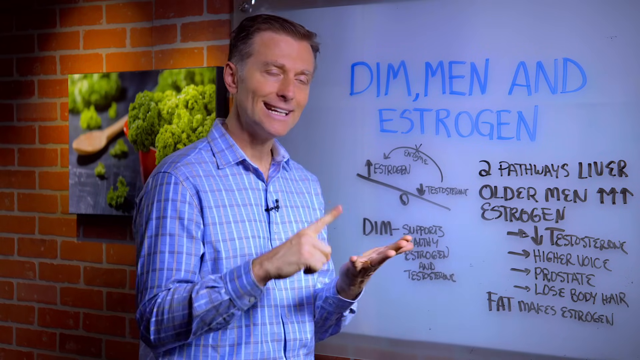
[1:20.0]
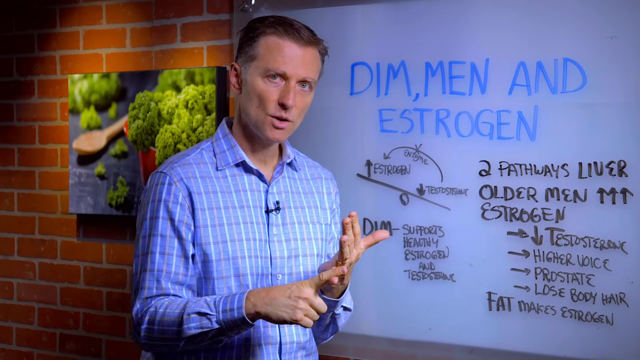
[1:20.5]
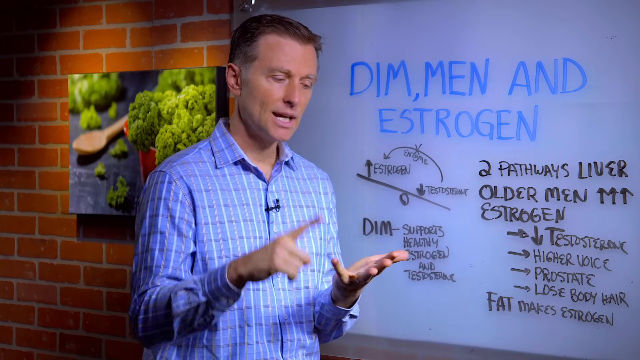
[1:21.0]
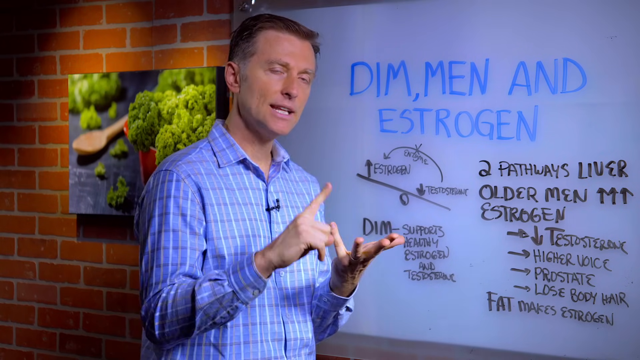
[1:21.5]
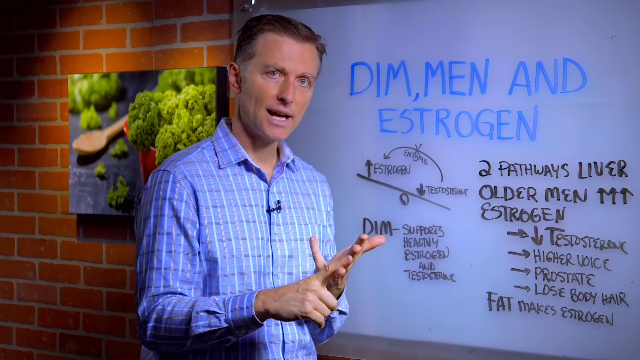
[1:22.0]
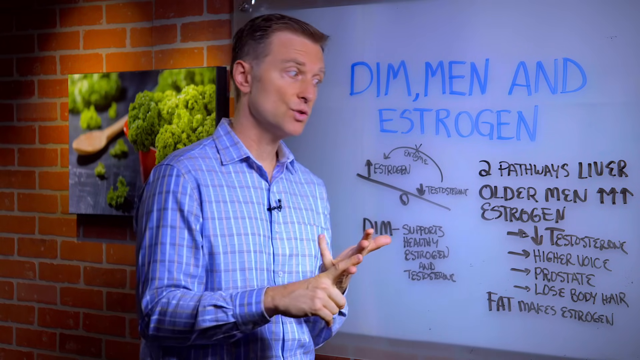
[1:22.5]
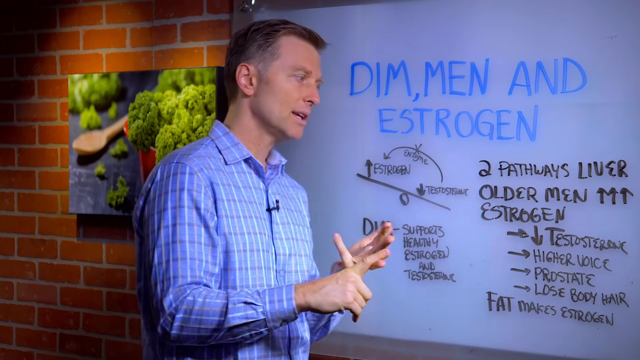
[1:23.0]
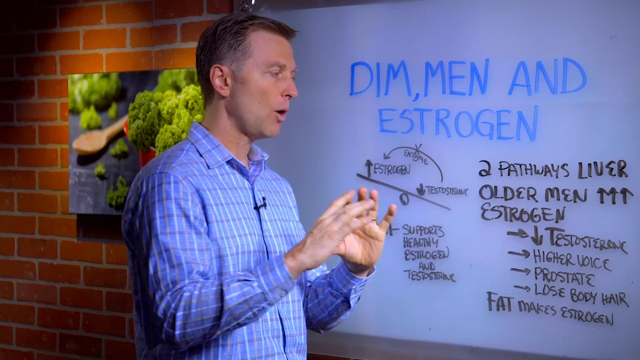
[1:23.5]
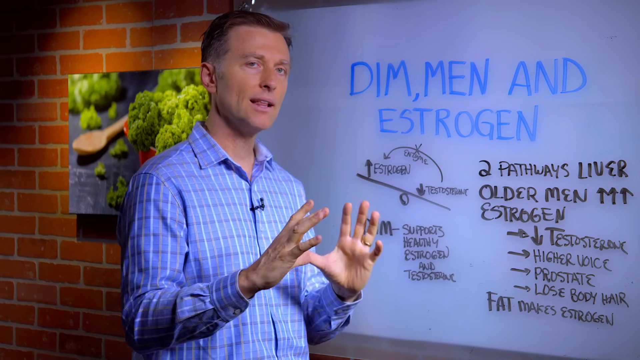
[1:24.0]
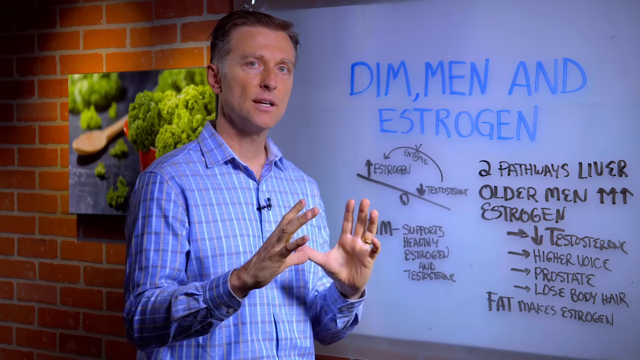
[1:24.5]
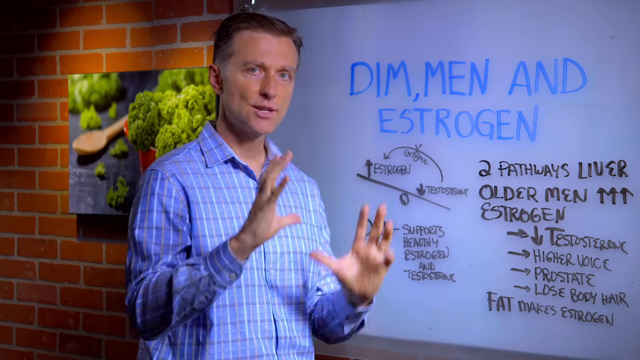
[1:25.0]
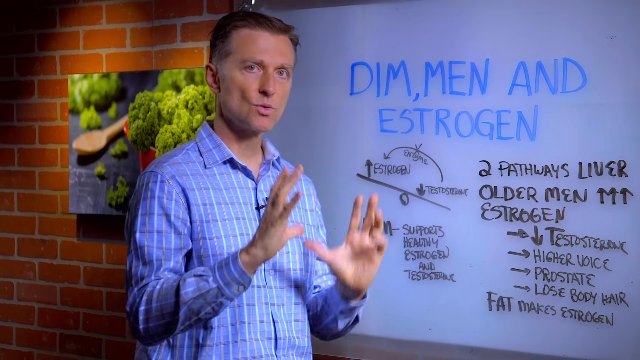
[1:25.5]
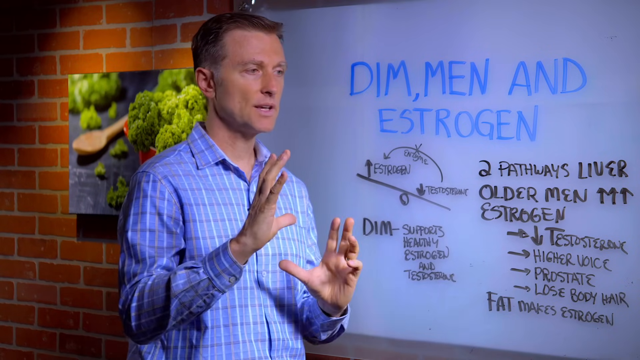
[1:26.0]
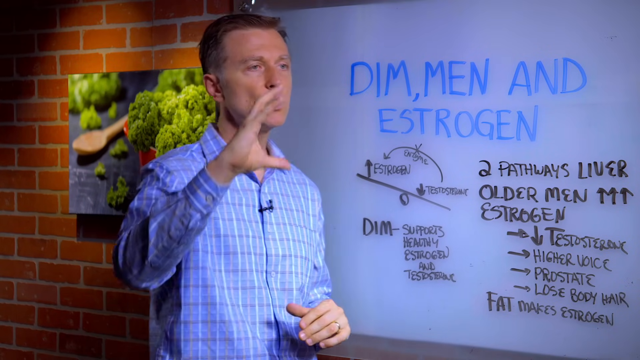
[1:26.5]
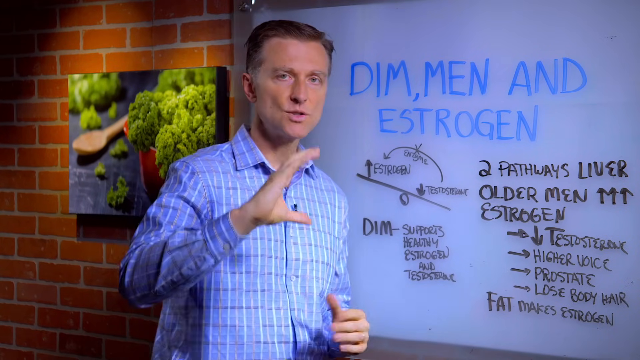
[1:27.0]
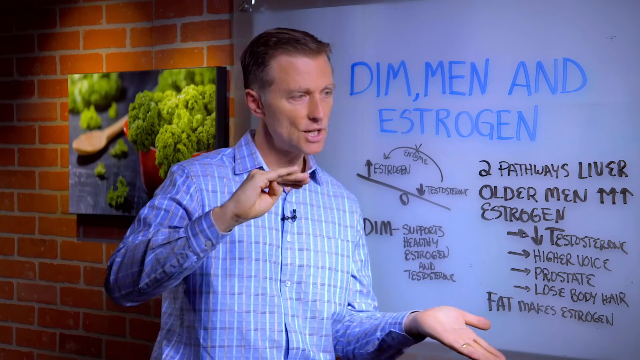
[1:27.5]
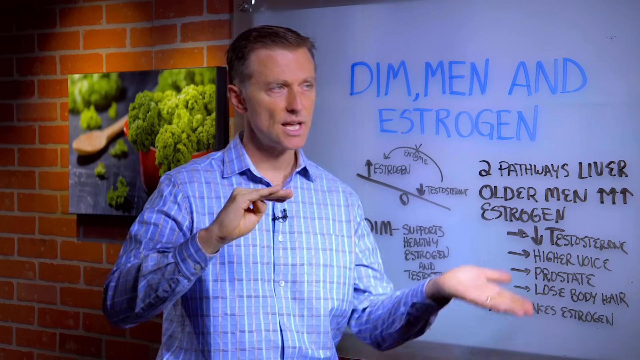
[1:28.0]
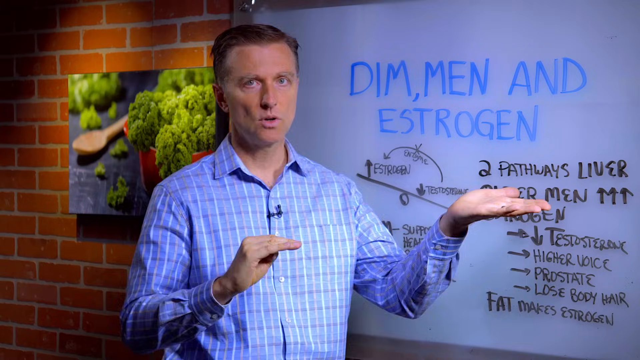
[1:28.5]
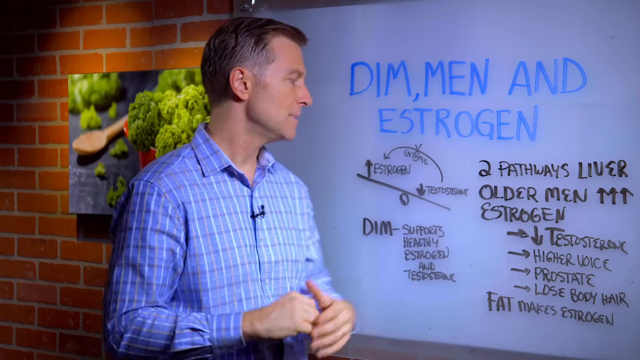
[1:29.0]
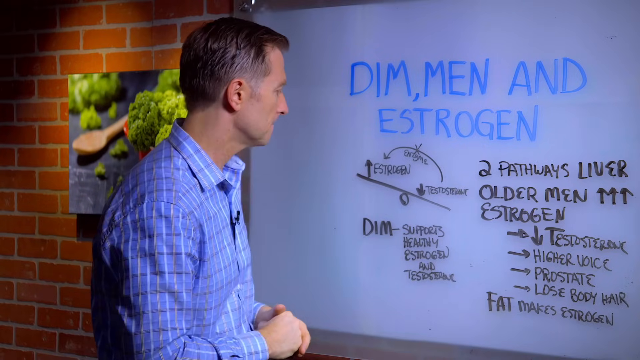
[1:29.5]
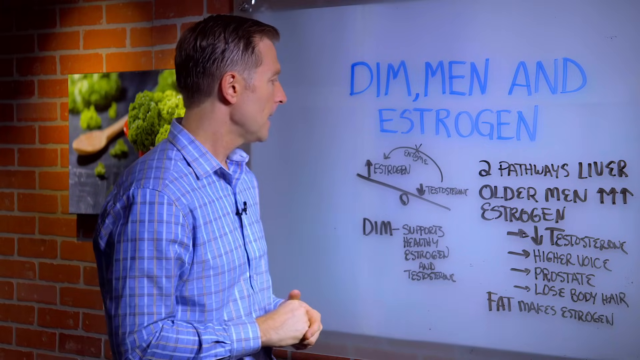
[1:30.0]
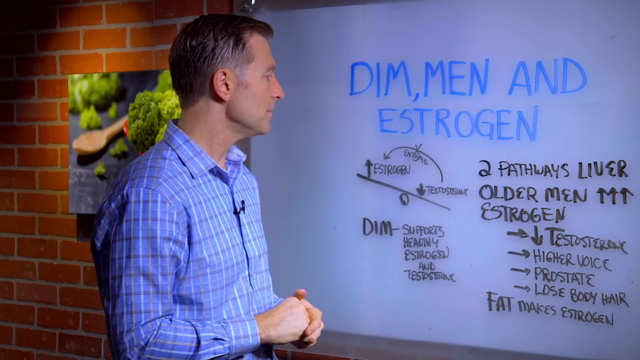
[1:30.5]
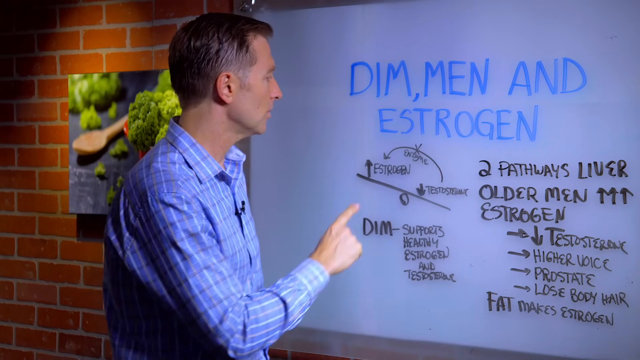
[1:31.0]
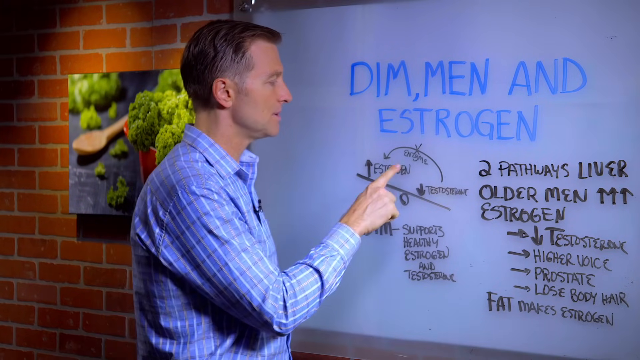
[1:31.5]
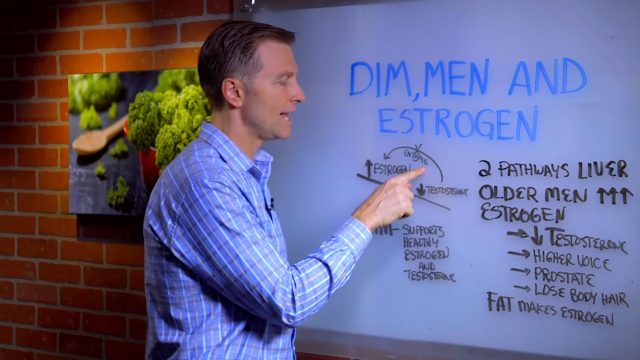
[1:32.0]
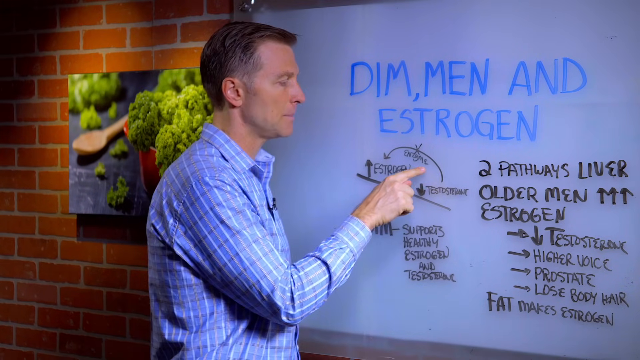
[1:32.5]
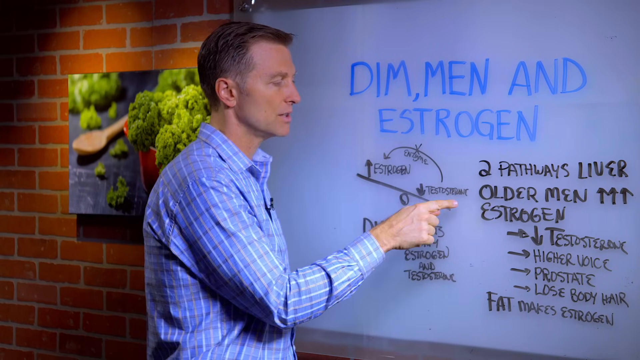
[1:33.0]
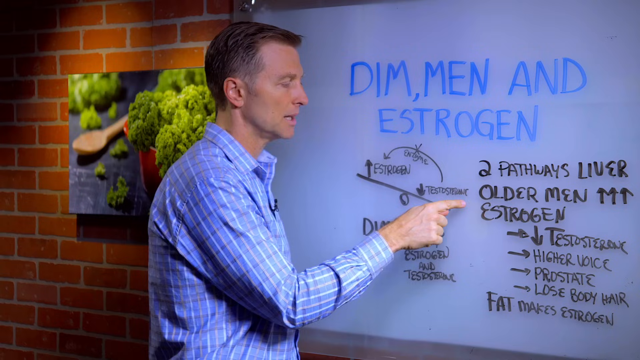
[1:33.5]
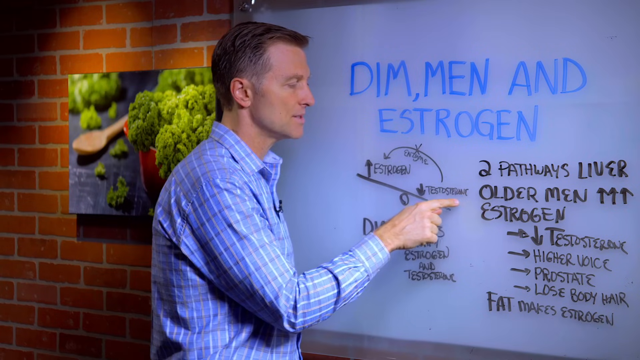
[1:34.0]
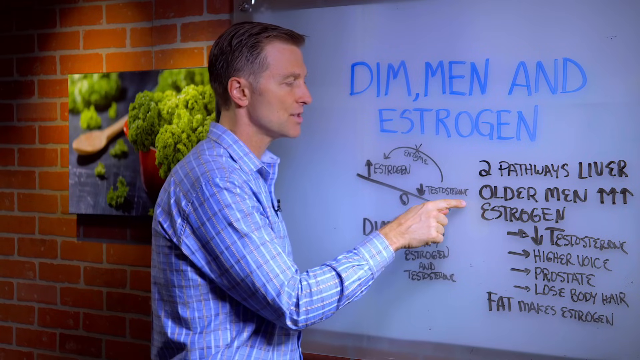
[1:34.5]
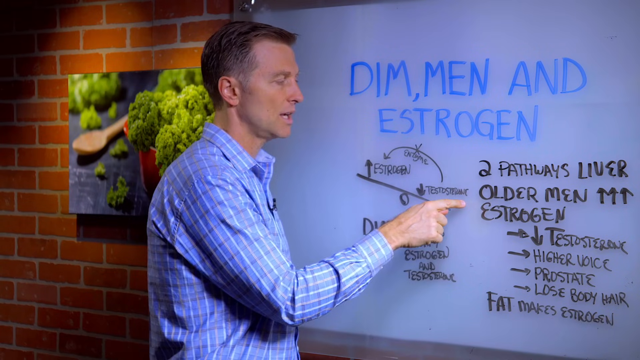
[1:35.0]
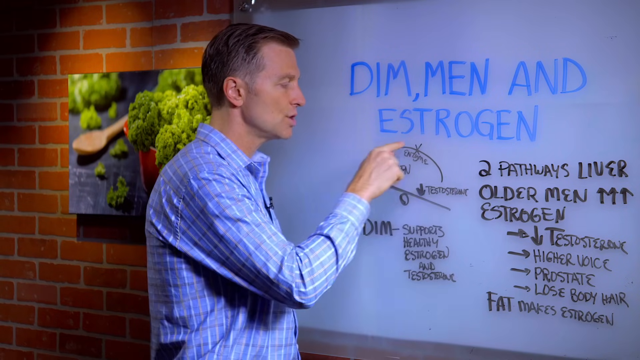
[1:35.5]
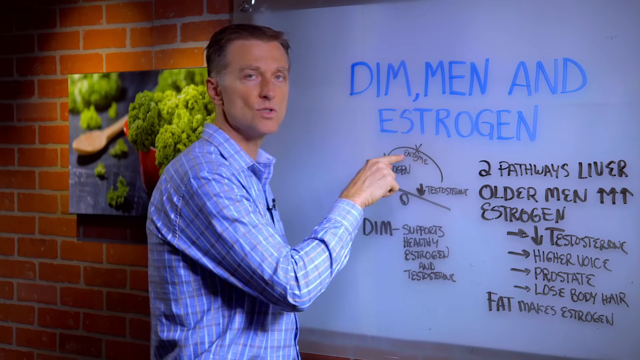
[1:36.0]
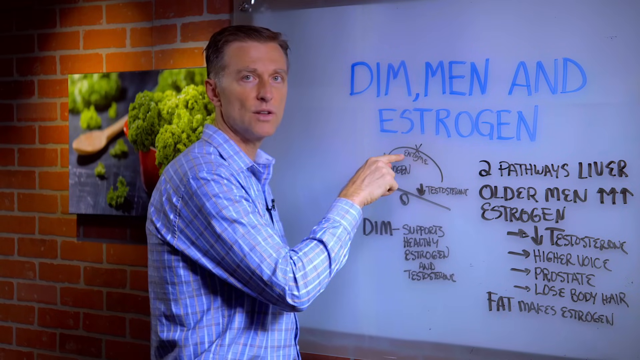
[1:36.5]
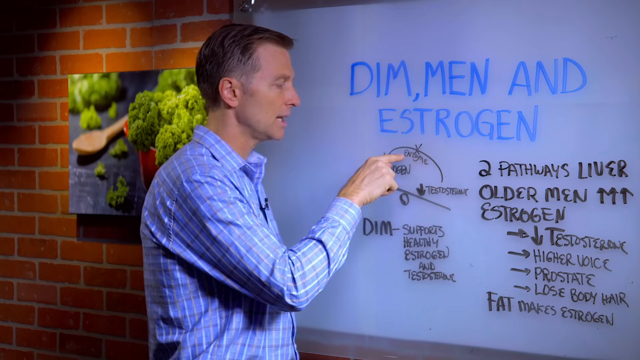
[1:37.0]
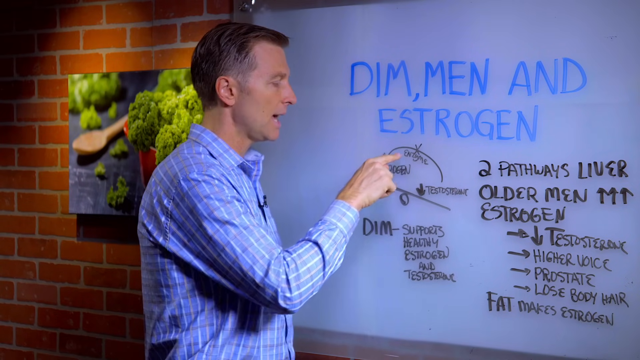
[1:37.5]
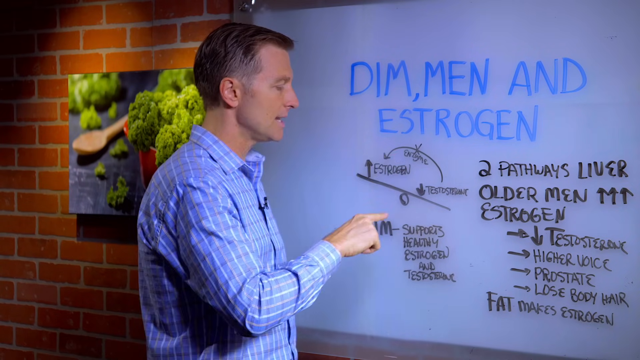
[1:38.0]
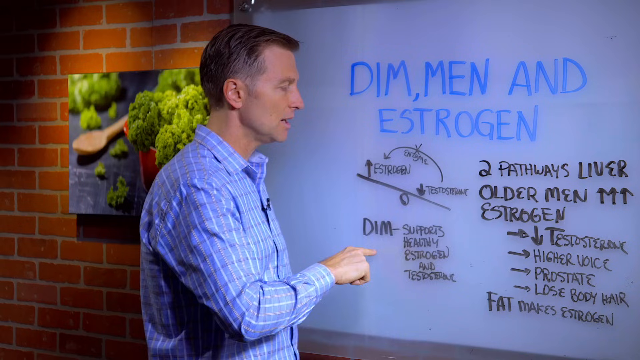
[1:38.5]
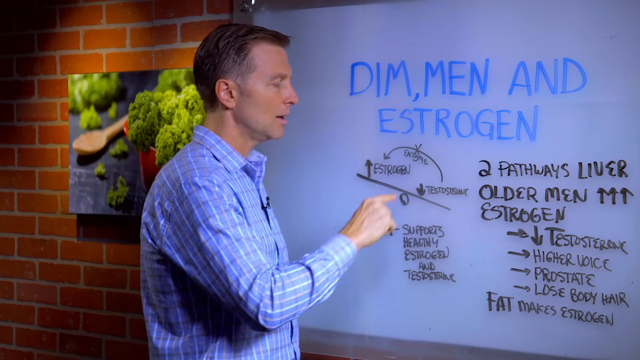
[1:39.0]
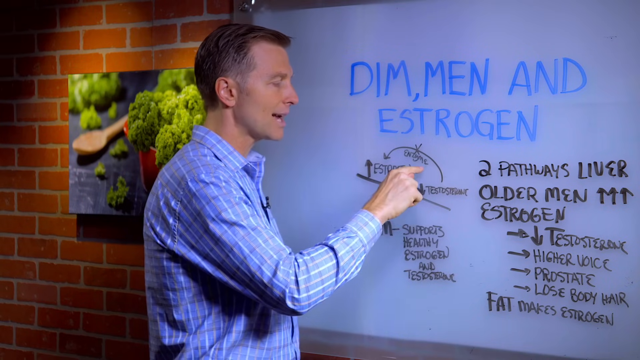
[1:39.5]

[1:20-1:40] A man in a blue plaited shirt, with a small black microphone clipped to his shirt, talks into the camera, looking forward and also back at a whiteboard behind him. The board has the words "Dim, men, and estrogen" in blue at the top and more writing in black at the bottom. He moves his hands slightly up and down as he talks and points to different areas of the board, going over the information on it. In the background there is what looks like a brick wall and a picture with something green, with a wooden spoon on the picture as well. The man points to a scale on the board that has estrogen on one side and testosterone on the other.